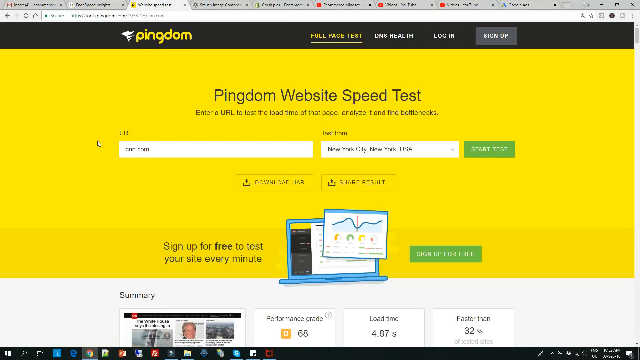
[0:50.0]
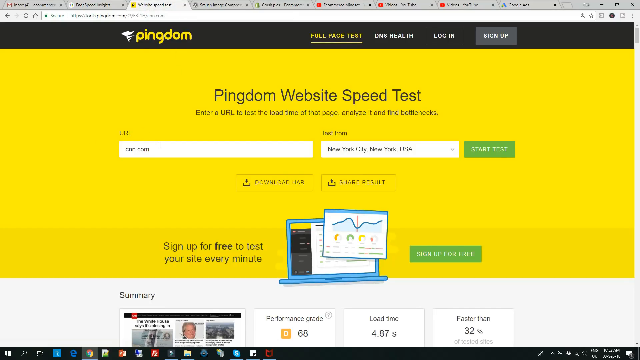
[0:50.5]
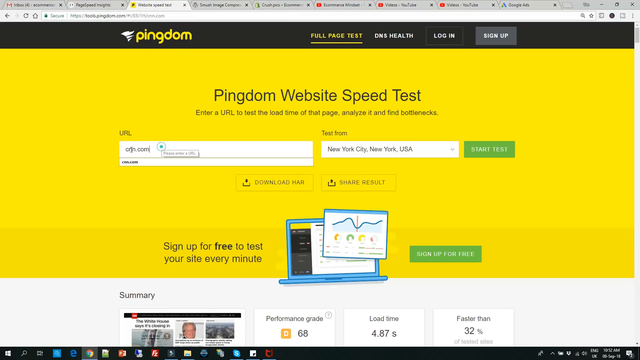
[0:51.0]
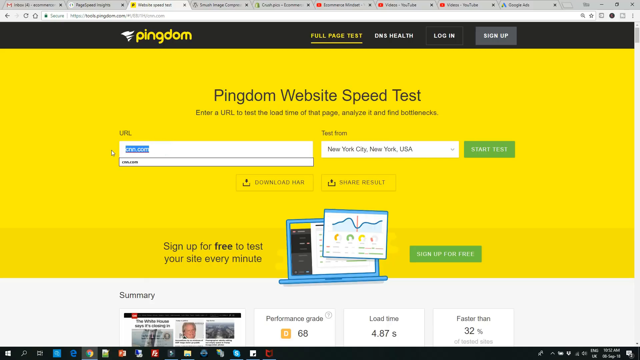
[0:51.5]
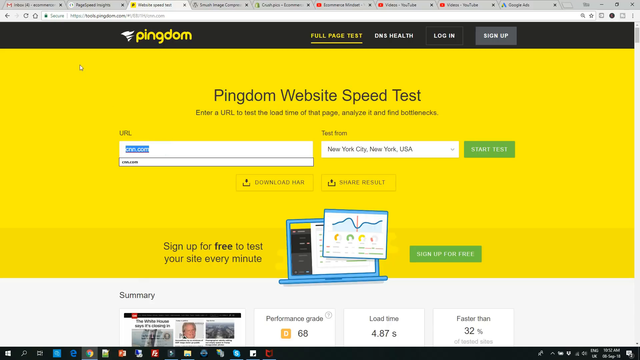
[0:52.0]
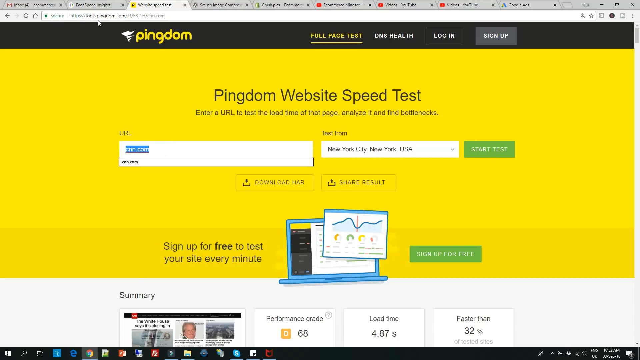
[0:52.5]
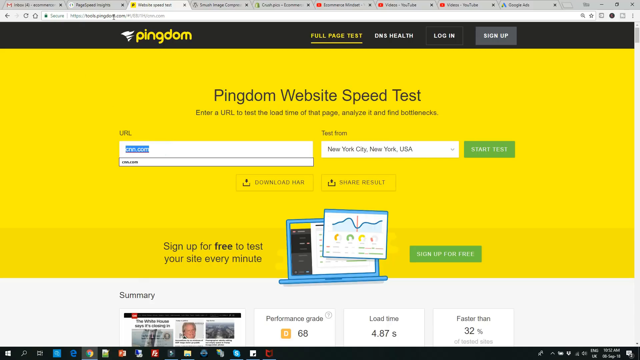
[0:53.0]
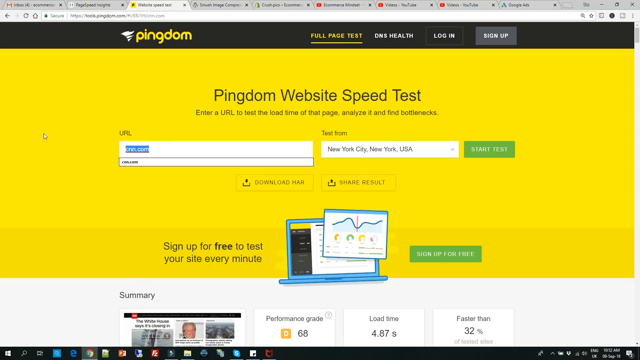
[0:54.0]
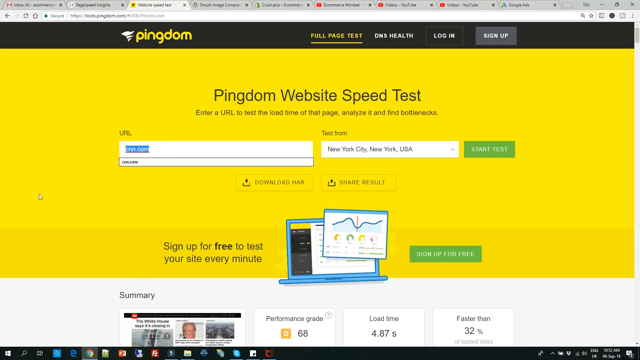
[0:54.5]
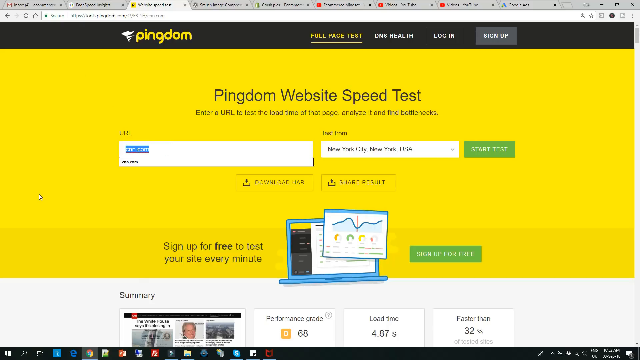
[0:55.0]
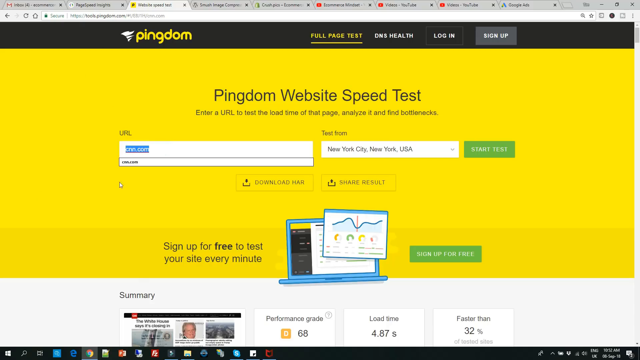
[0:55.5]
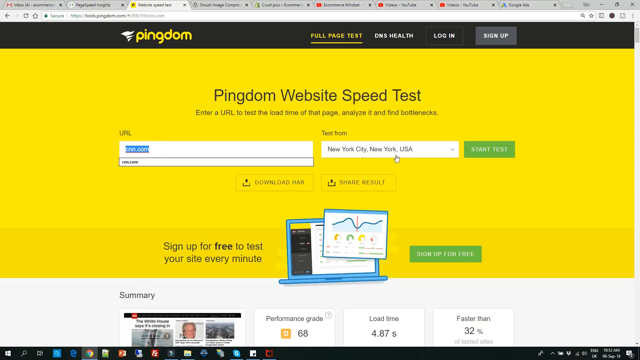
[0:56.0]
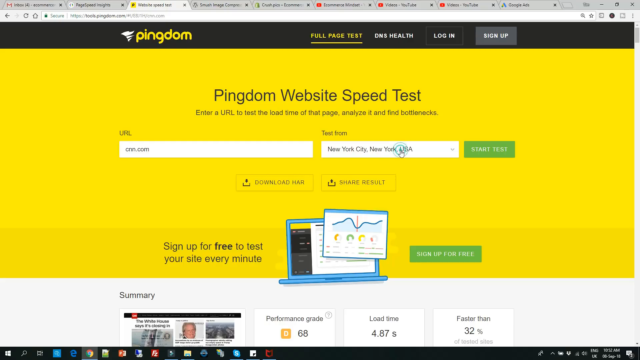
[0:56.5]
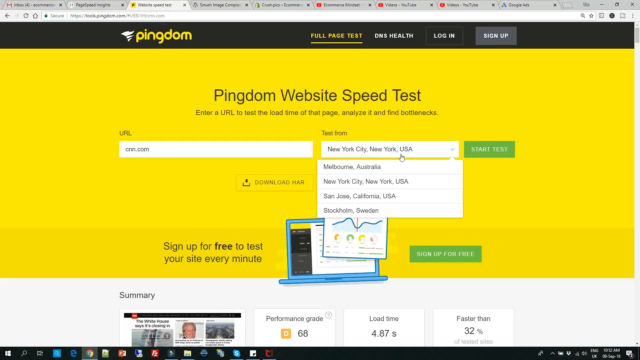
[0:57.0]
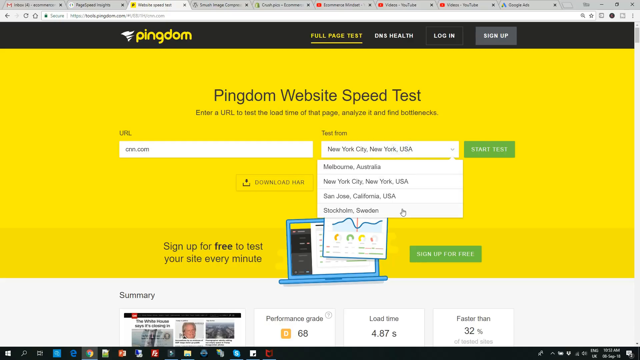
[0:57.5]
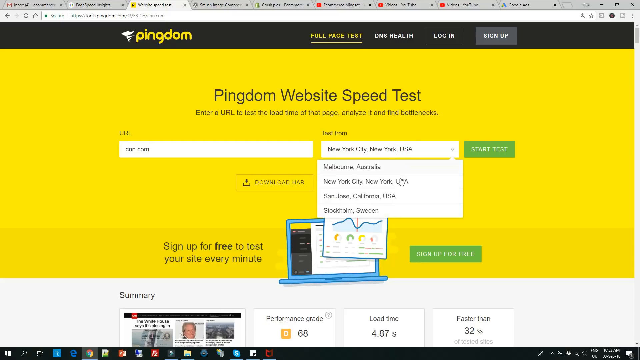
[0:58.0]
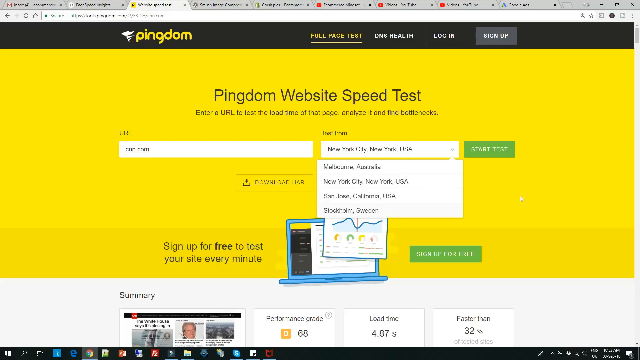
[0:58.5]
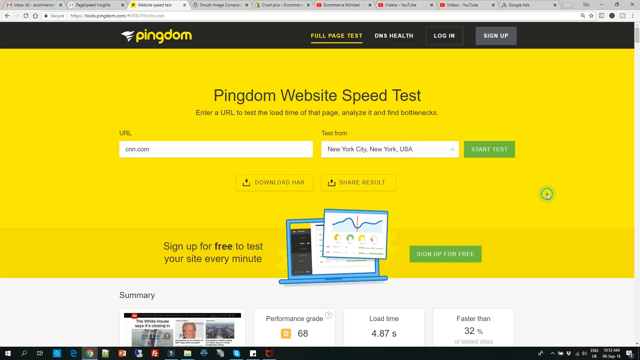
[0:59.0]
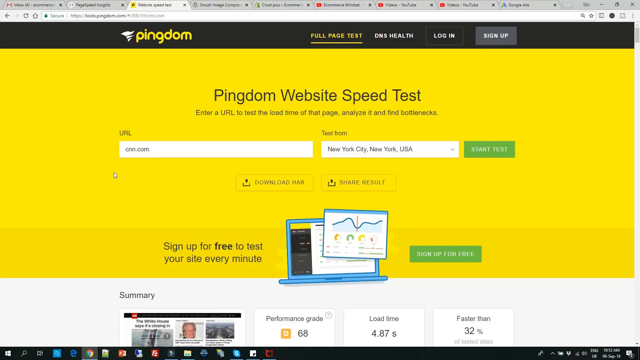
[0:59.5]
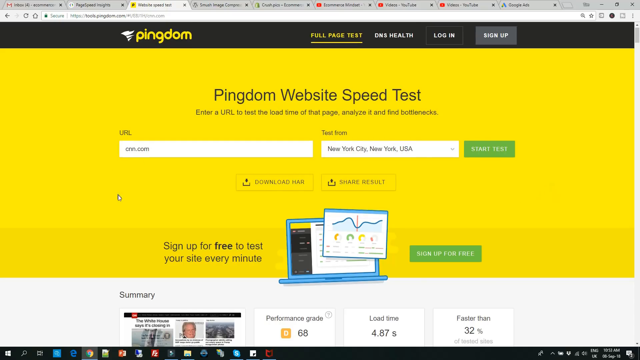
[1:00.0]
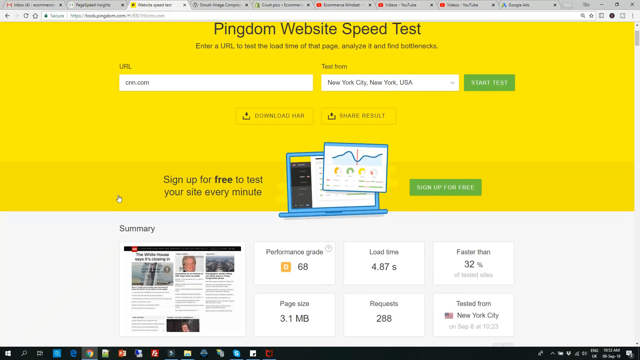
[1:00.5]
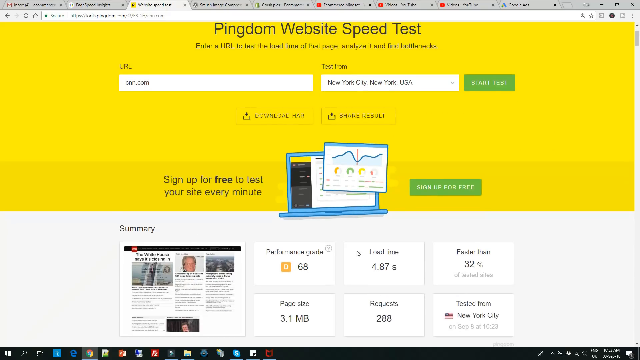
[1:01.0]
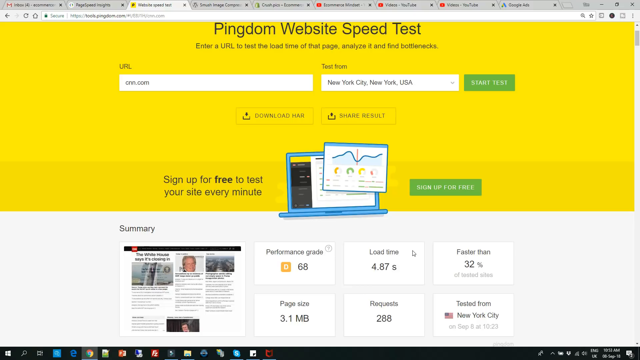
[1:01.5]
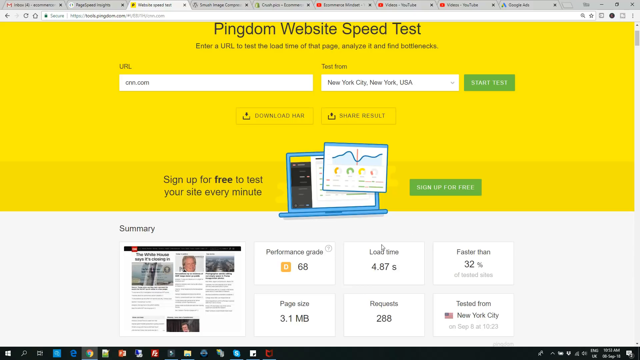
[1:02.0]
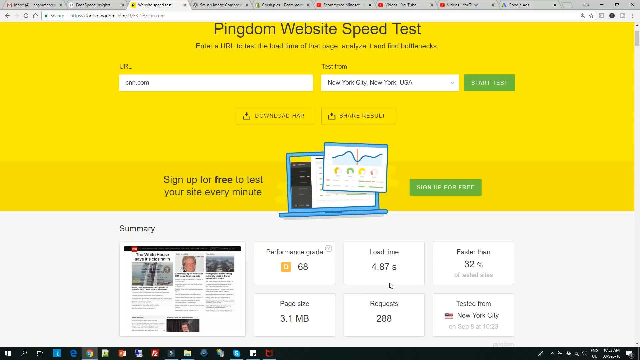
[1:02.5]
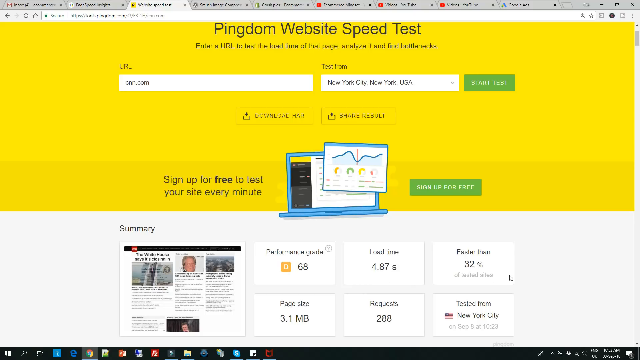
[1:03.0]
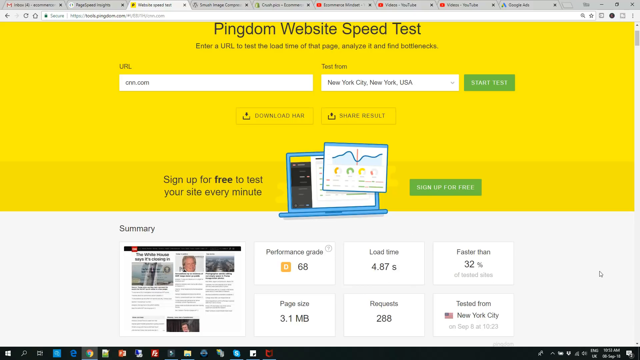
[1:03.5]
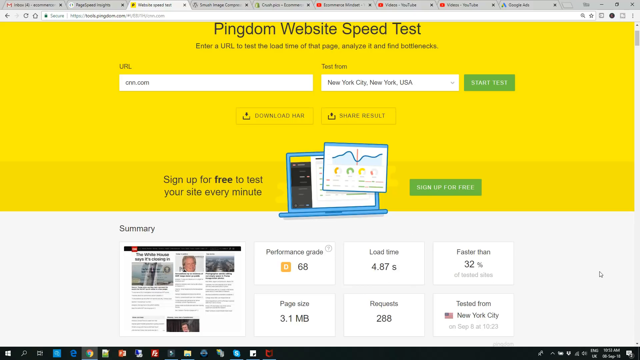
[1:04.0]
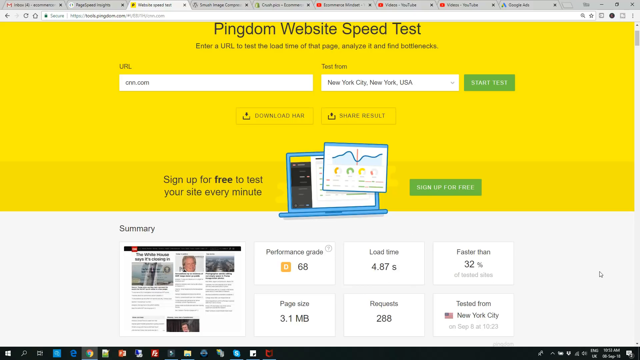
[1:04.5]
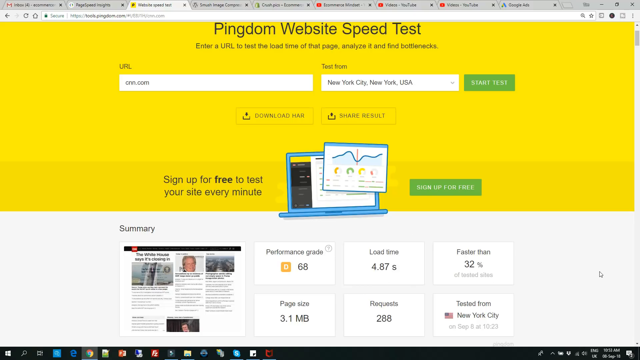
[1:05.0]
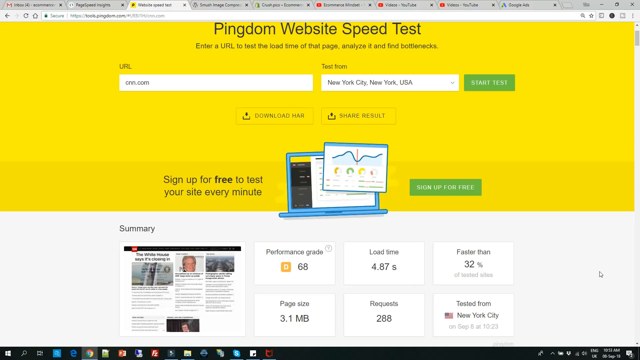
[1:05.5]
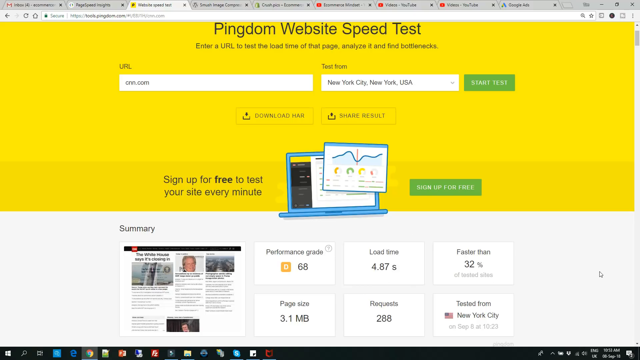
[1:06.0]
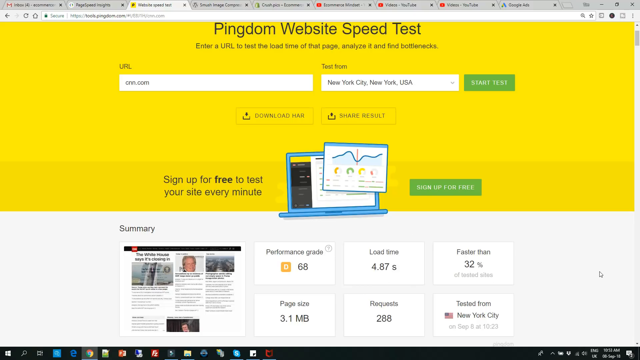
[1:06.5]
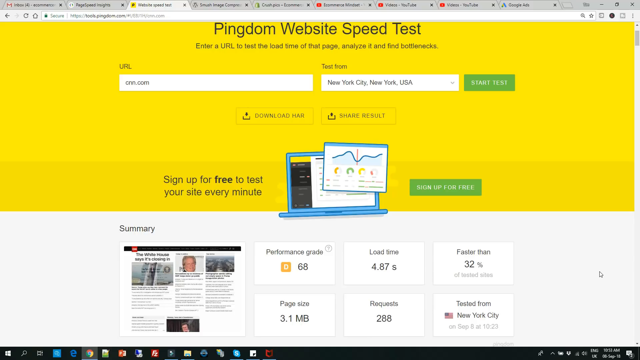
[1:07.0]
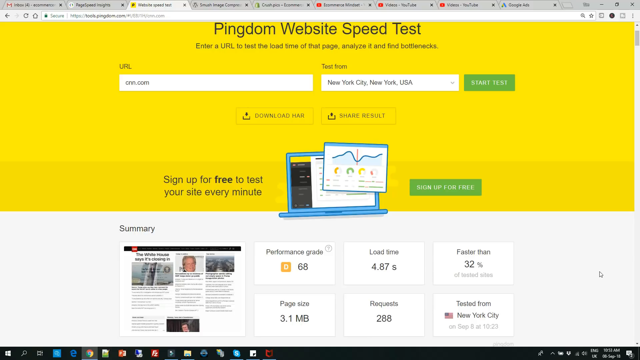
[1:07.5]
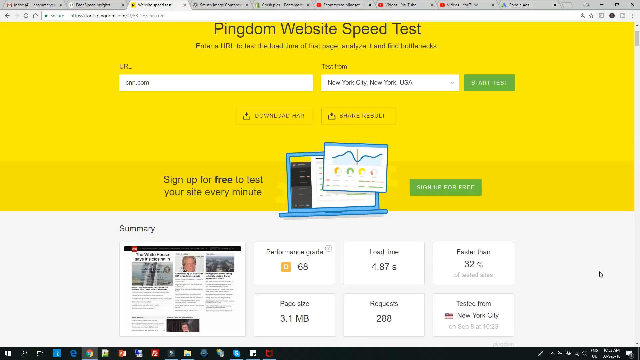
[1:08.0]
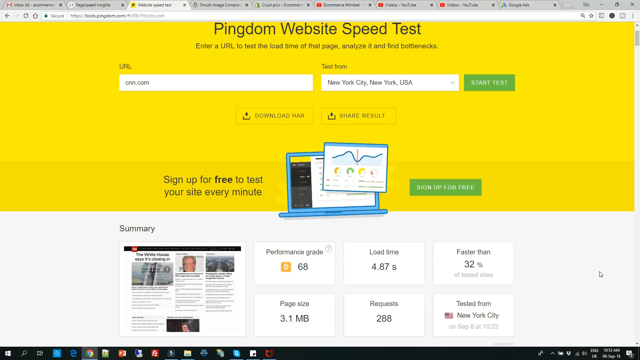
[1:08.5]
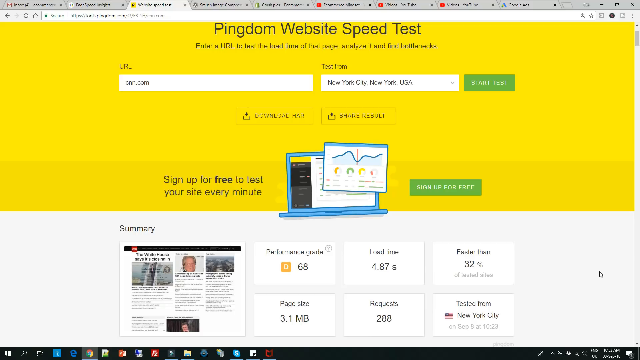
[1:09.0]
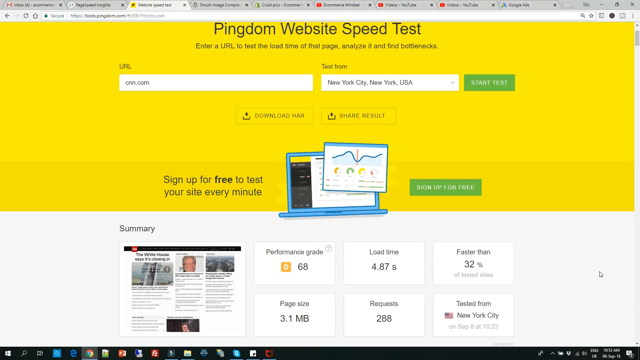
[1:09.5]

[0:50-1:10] The computer has about nine tabs open, and the Pingdom site with a yellow background is on screen. It reads "Pingdom website speed test" and "Enter a URL to test the load time of that page", "Analyze it and find bottlenecks". The URL field contains cnn.com, and the test location is "New York City, New York, USA". The cnn.com entry is highlighted; the city seems about to change, but it stays New York. The page scrolls down to a summary showing "Performance grade 68" and that the site is faster than 32% of tested sites.